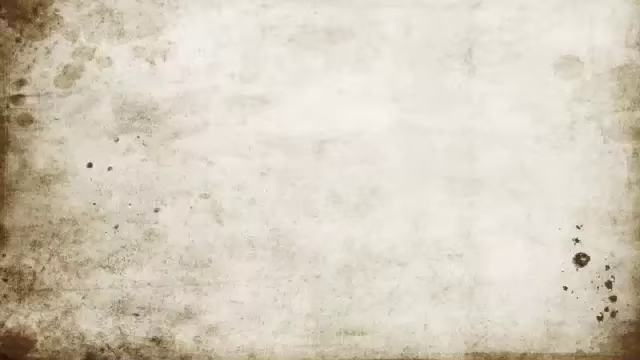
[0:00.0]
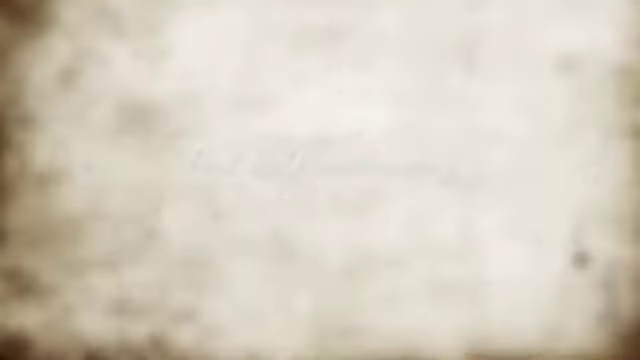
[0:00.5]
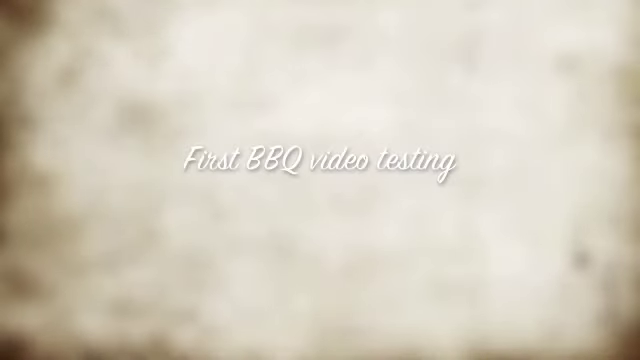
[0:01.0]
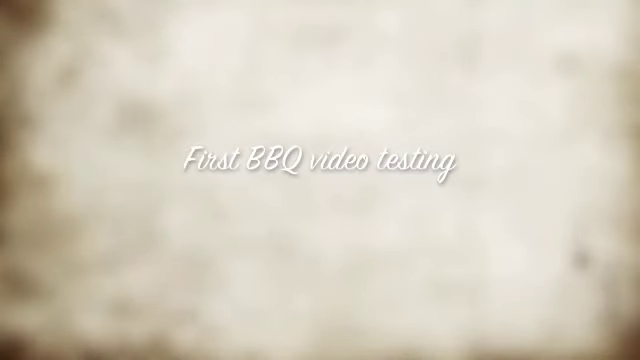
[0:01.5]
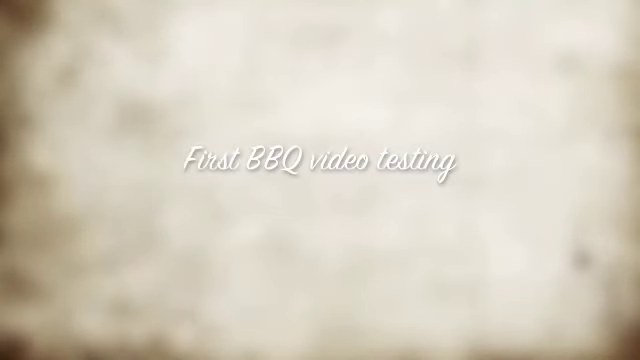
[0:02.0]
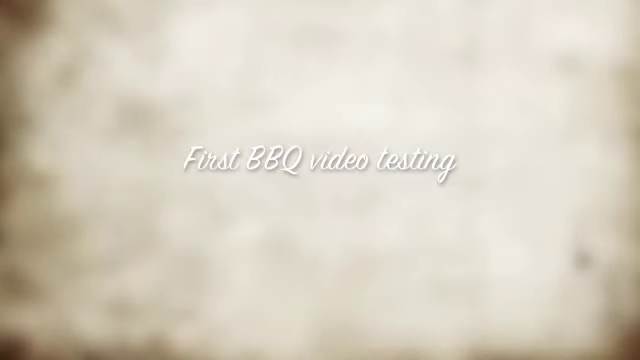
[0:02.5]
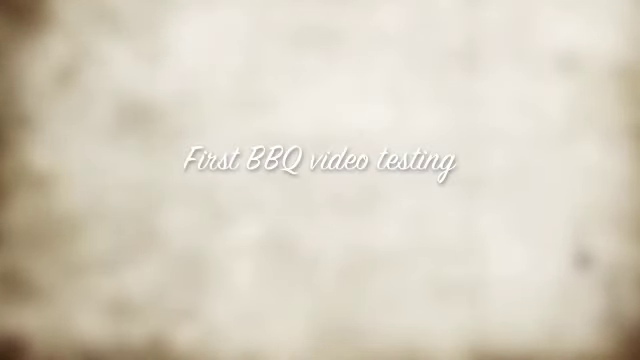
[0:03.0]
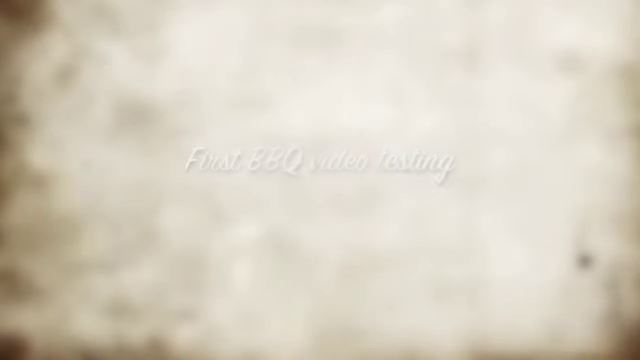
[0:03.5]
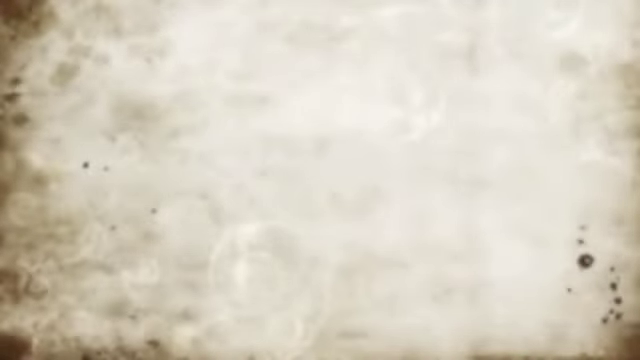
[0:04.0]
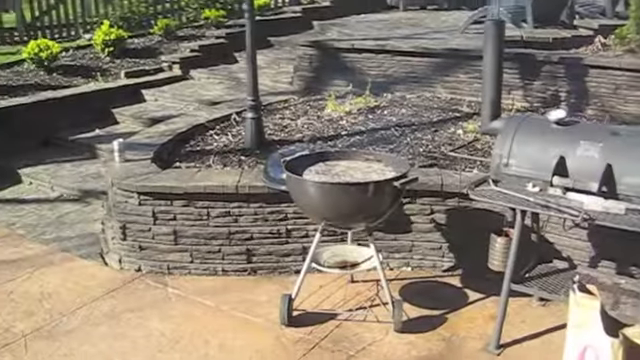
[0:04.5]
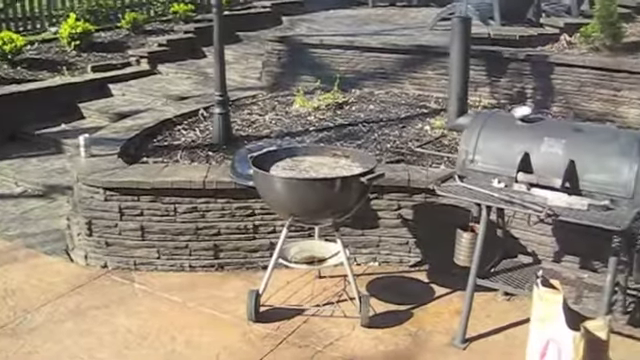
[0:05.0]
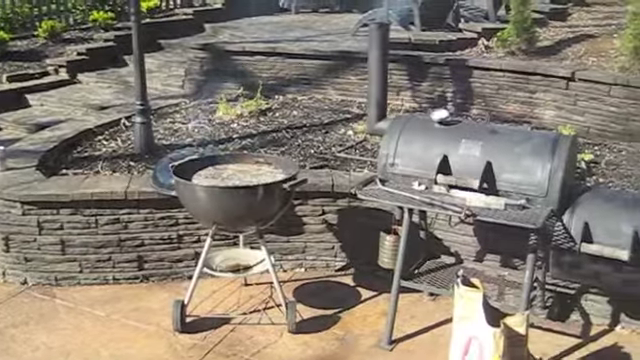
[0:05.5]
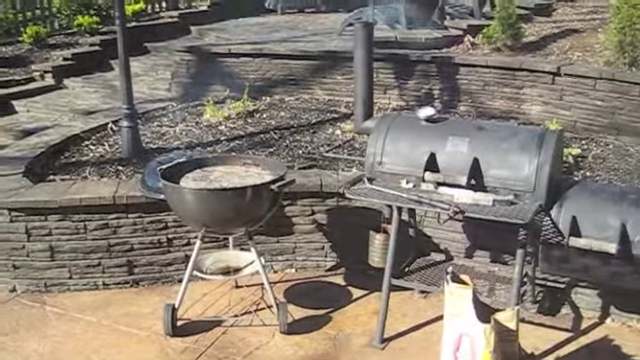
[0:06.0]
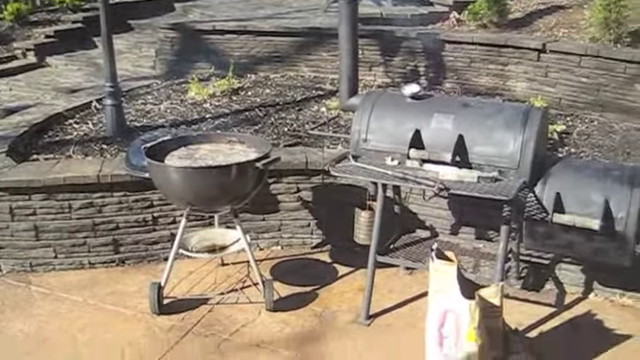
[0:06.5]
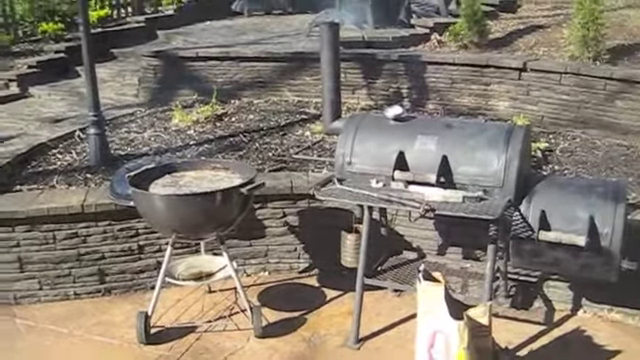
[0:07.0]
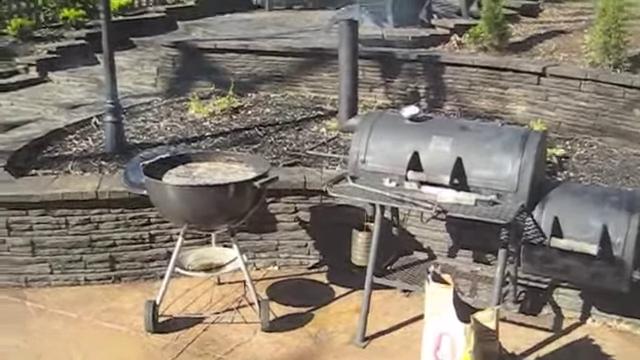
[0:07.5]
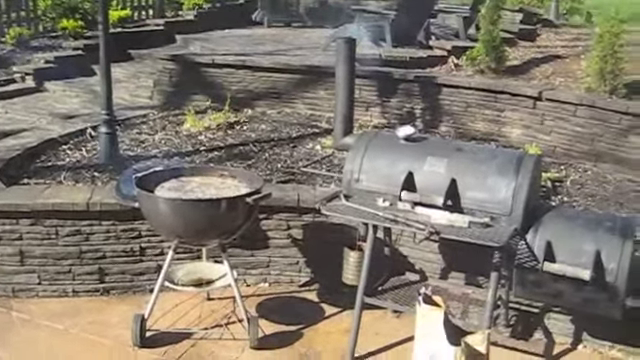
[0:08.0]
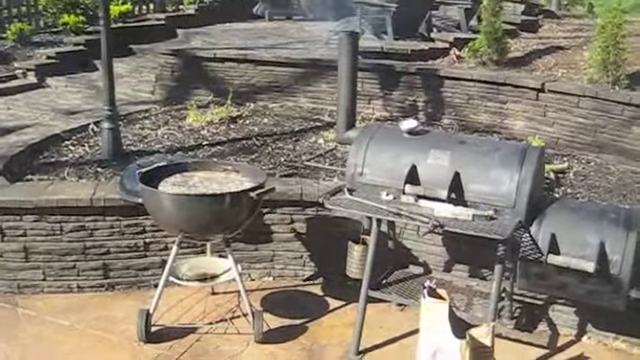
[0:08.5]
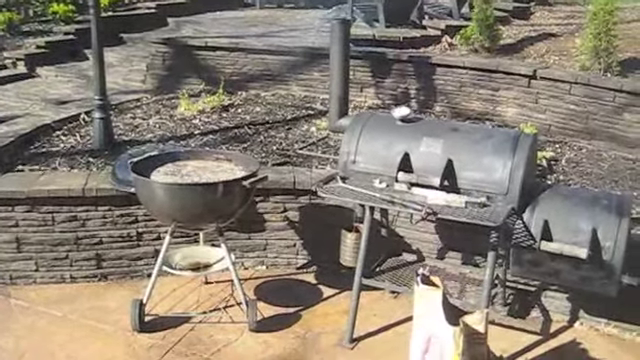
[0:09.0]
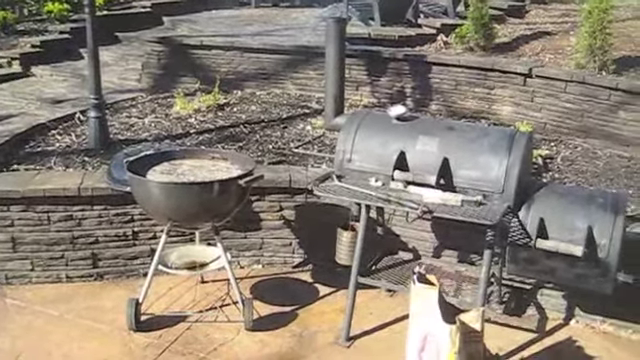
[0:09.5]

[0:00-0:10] Text appears reading something like "first barbecue video testing." The next scene is an open space that looks like it is outside, with green grass and green trees. There are stands that look very advanced, and one of them has a shimmer. No people are visible.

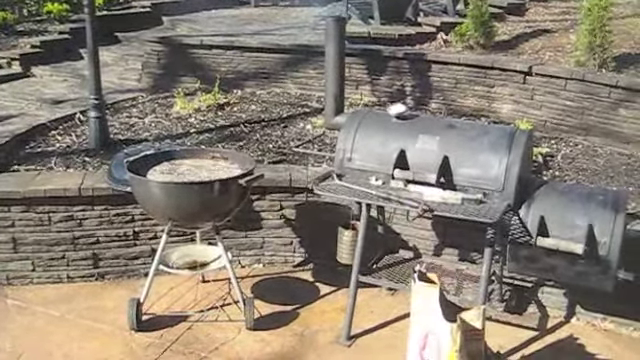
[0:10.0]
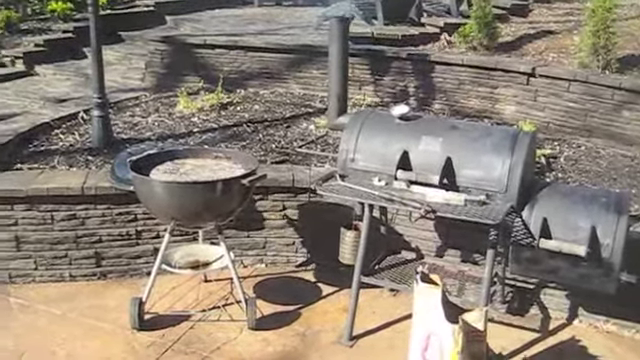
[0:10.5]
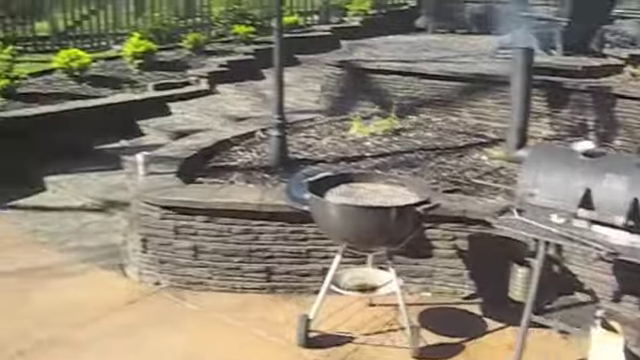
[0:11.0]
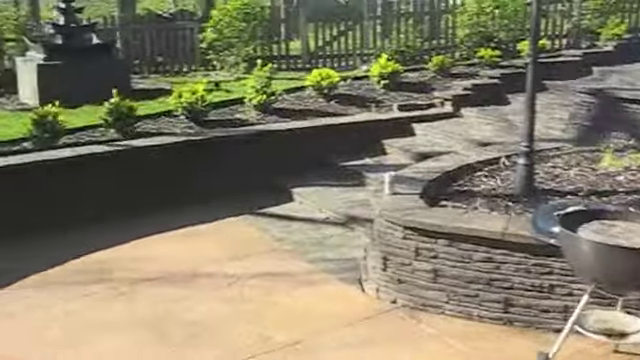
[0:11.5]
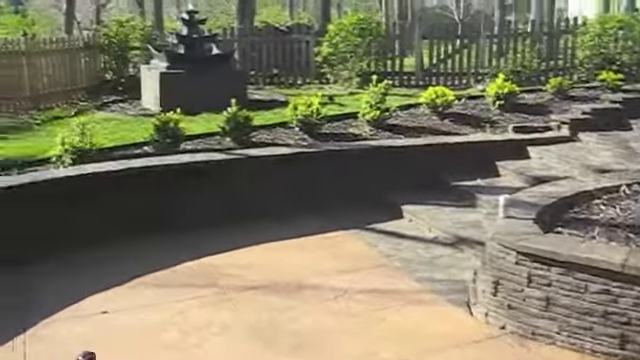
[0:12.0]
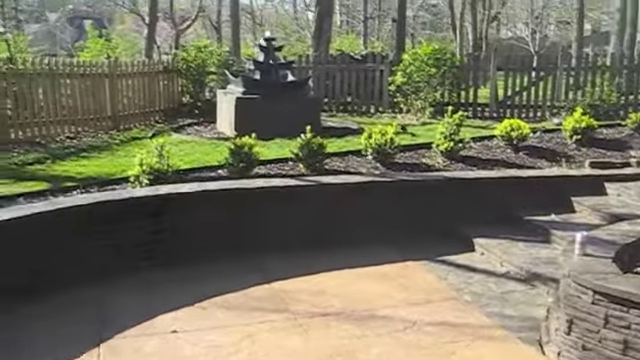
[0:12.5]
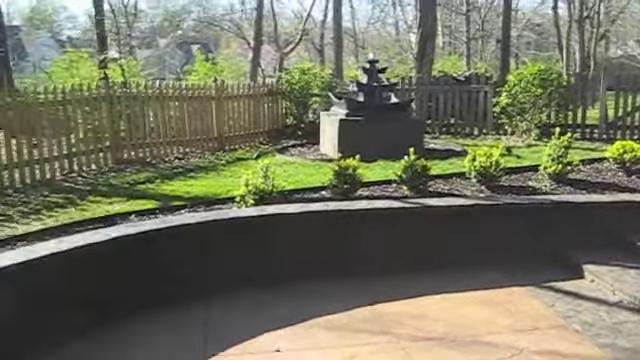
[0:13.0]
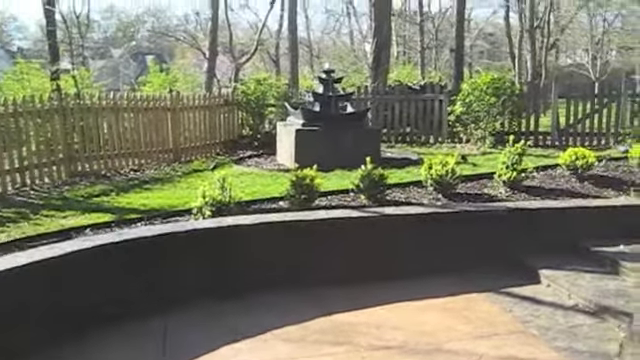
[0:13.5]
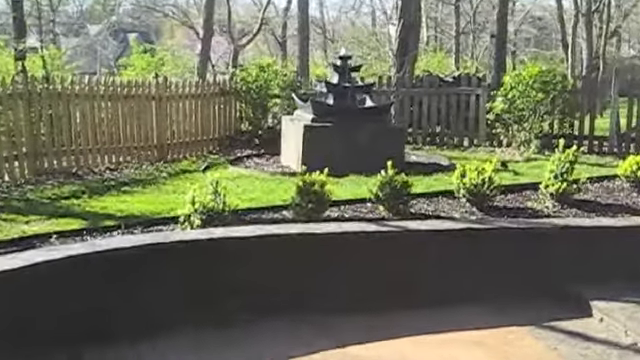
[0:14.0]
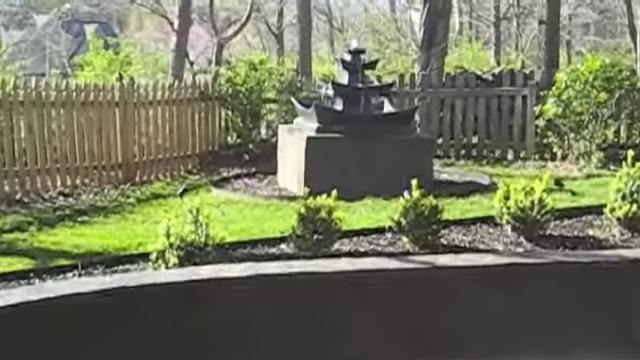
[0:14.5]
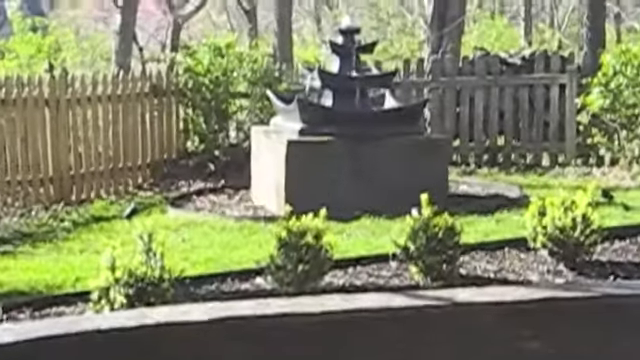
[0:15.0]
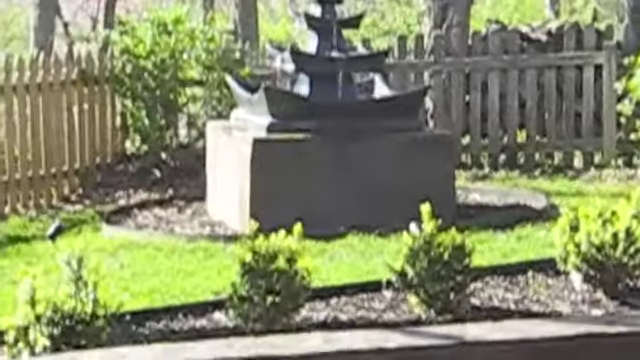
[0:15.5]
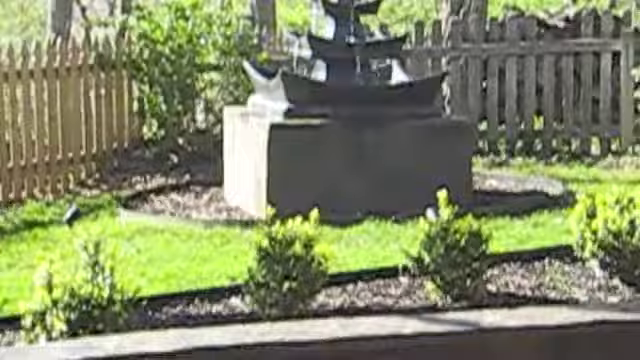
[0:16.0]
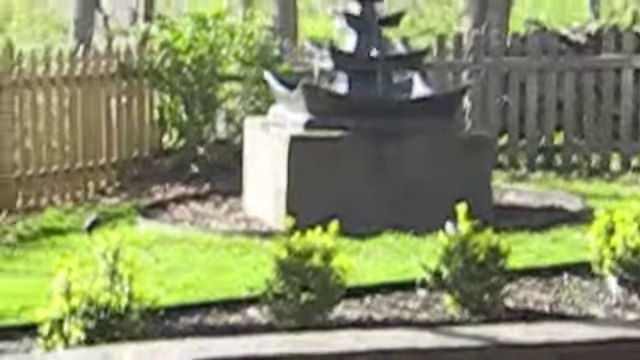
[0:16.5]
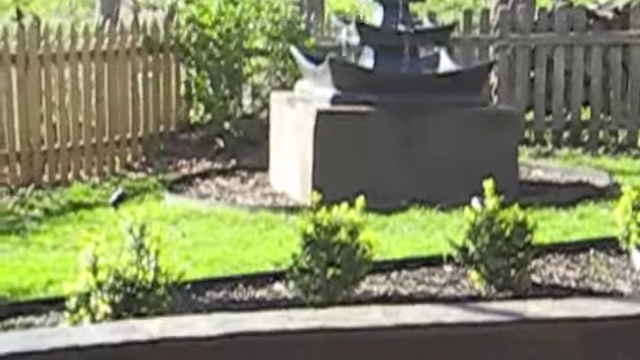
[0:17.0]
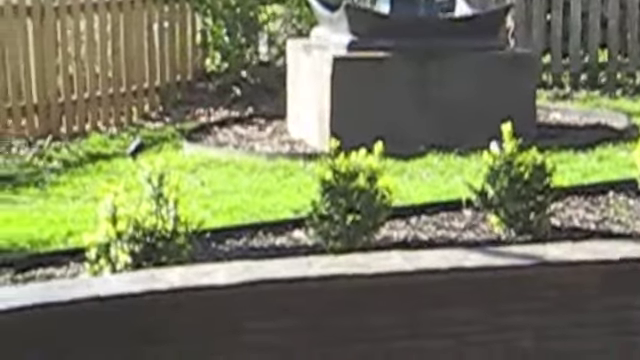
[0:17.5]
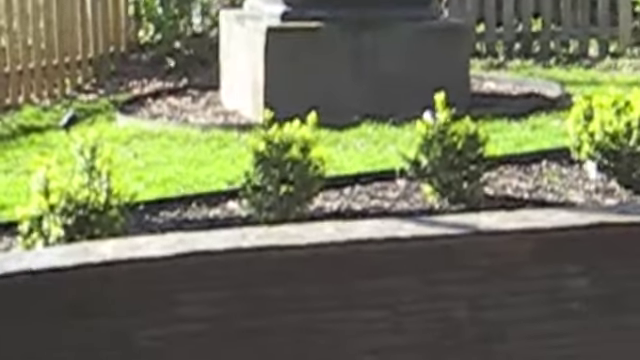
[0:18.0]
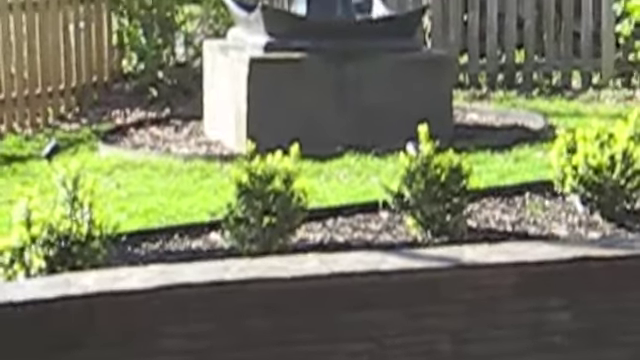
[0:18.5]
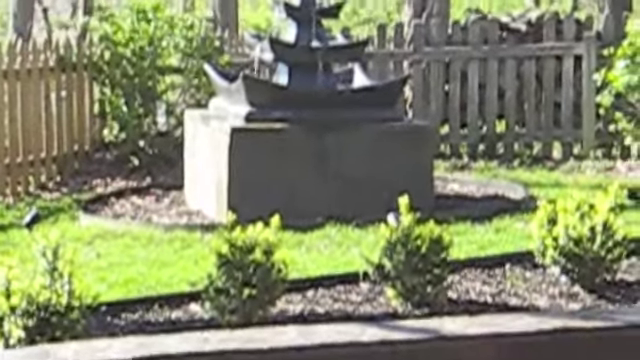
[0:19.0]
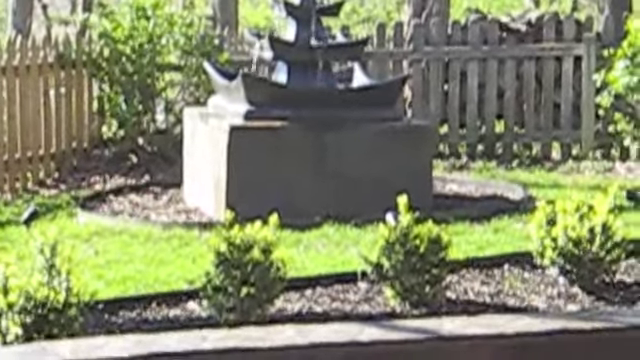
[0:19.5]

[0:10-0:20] The place is shown more clearly. It looks neat, with no paper lying on the ground. There are steps, including steps going up, and green flowers growing. The grass is very green. There are three different types of stands; no people are present and there is no meat on them. Smoke rises from one of the stands, where a fire is going.